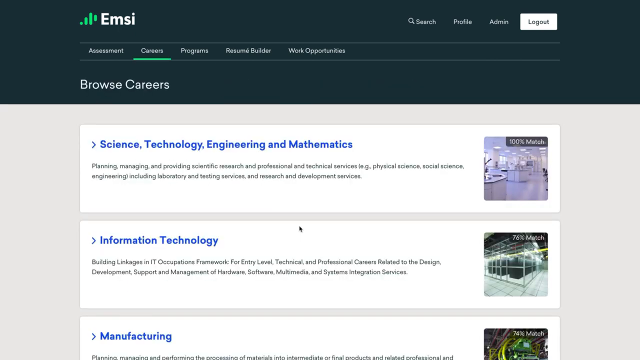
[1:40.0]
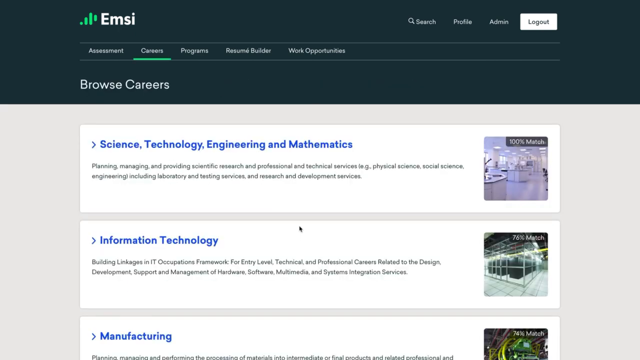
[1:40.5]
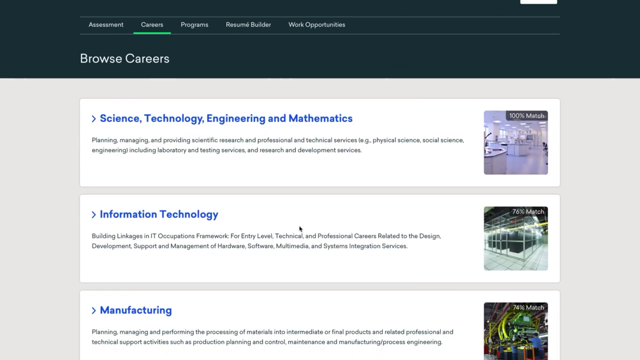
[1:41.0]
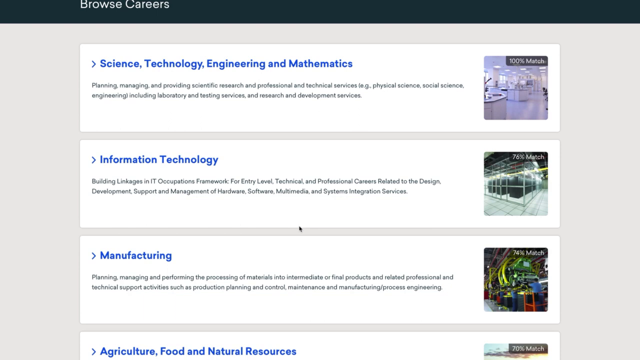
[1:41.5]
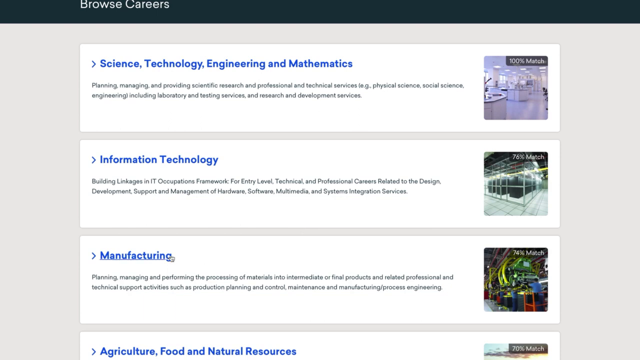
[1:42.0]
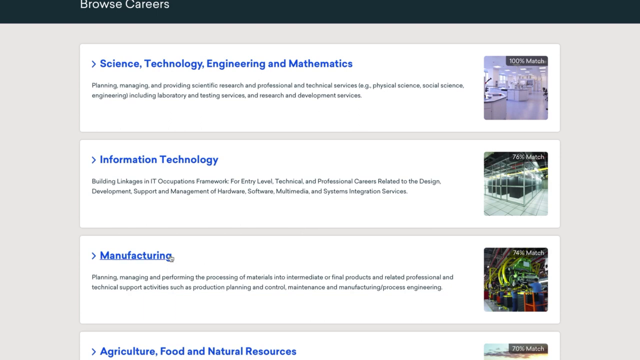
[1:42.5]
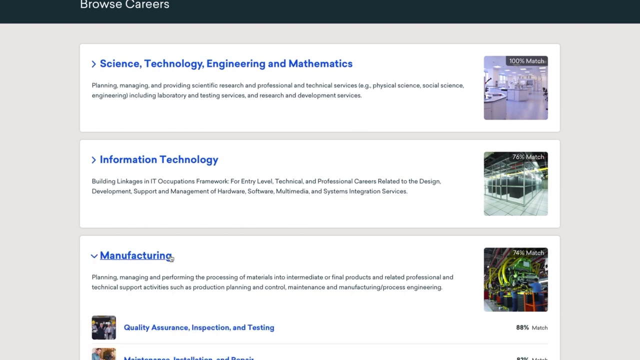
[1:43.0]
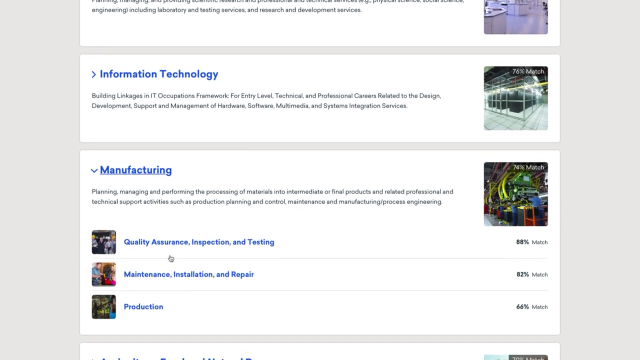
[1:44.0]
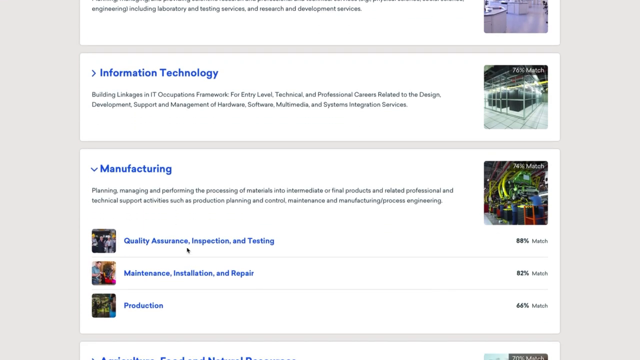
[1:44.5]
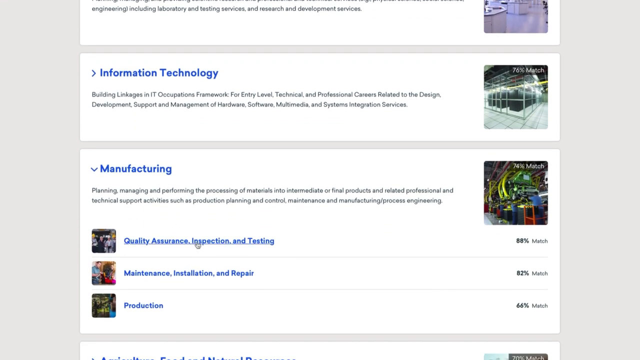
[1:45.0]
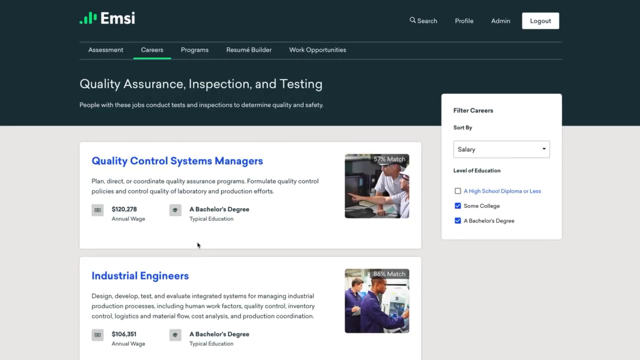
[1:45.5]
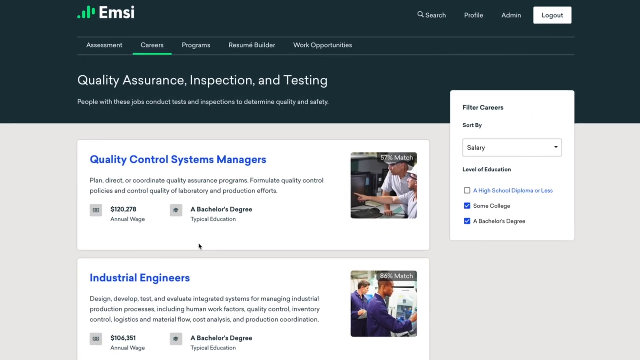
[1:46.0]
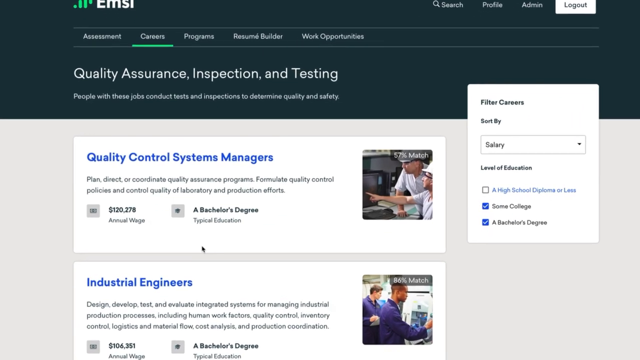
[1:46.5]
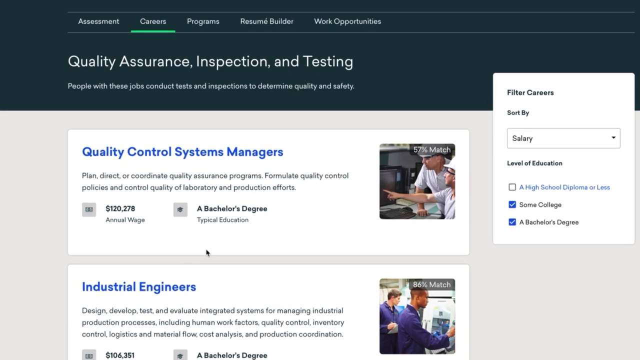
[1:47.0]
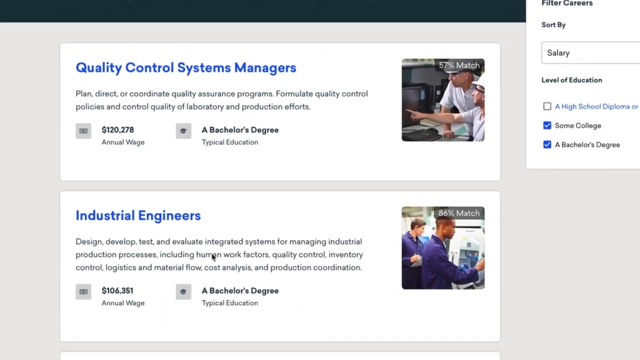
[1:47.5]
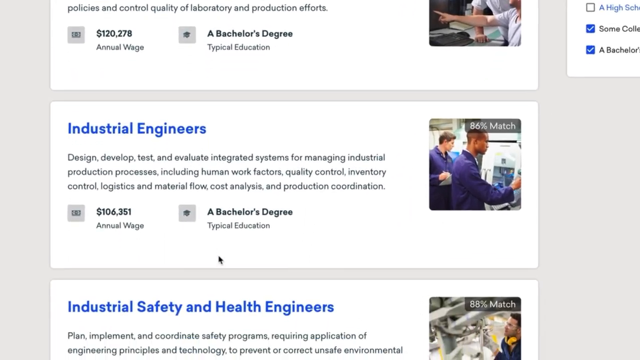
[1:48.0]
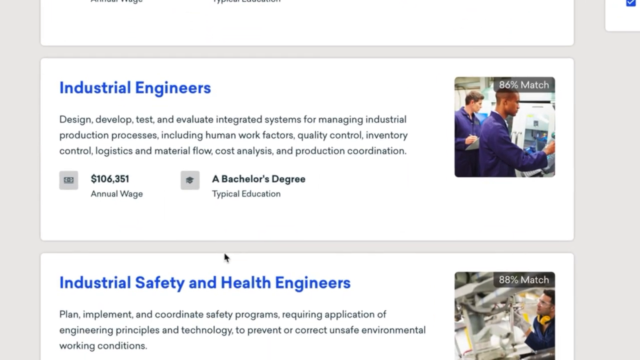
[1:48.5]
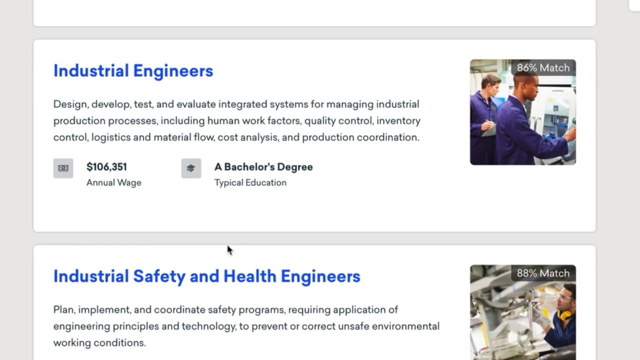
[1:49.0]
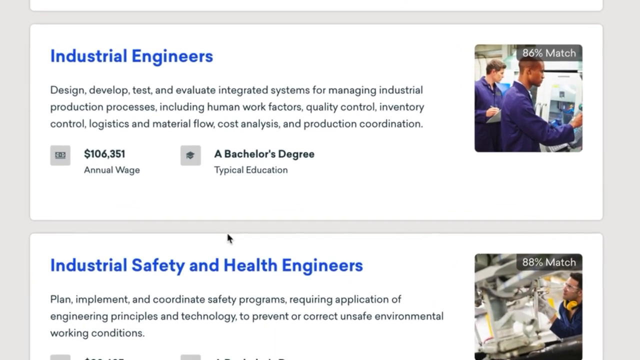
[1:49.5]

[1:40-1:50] On the MC Job Postings website, the user is on a page titled "Browse Careers," with the sections Science, Technology, Engineering, and Mathematics; Information Technology; and Manufacturing. The user clicks Manufacturing, which opens a sub-menu with options such as Quality Assurance, Inspection, and Testing; Maintenance, Installation, and Repair; and Production. The user clicks Quality Assurance, Inspection, and Testing, which leads to the Quality Assurance, Inspecting, and Testing page. Two options are on screen, Quality Control Systems Managers and Industrial Engineers. The user scrolls down to a third option, Industrial Safety and Health Engineers.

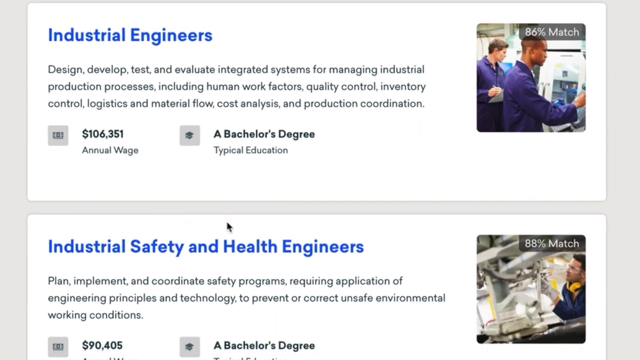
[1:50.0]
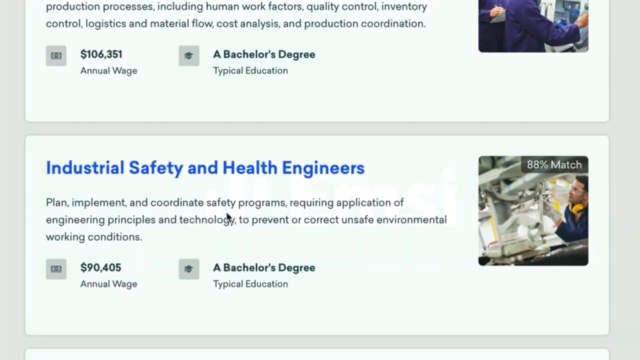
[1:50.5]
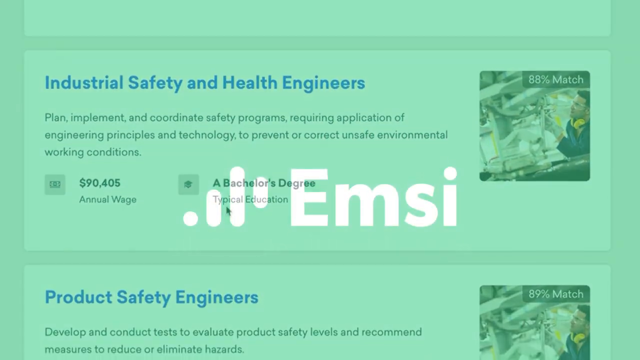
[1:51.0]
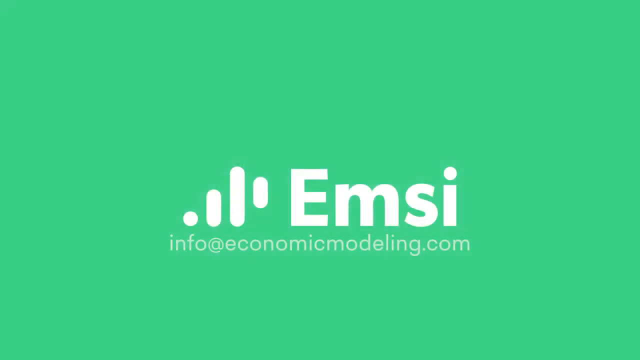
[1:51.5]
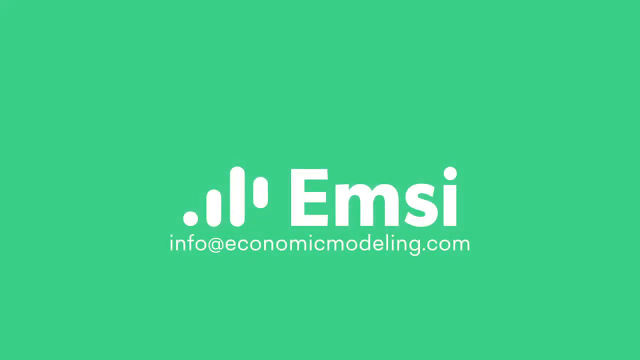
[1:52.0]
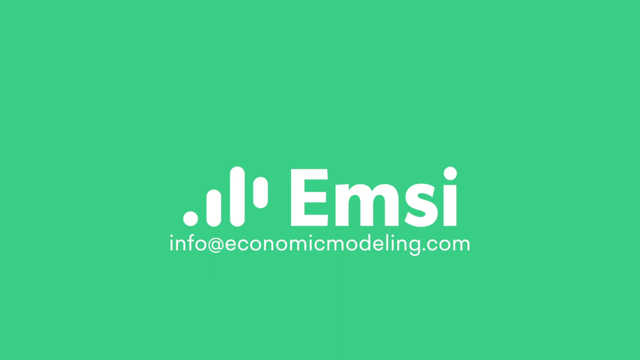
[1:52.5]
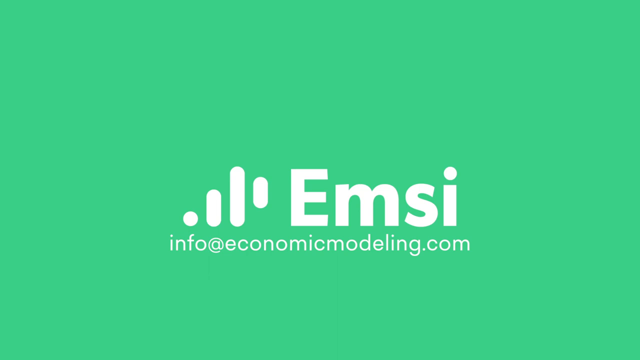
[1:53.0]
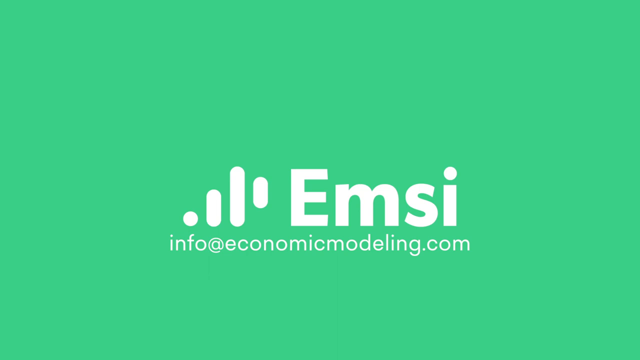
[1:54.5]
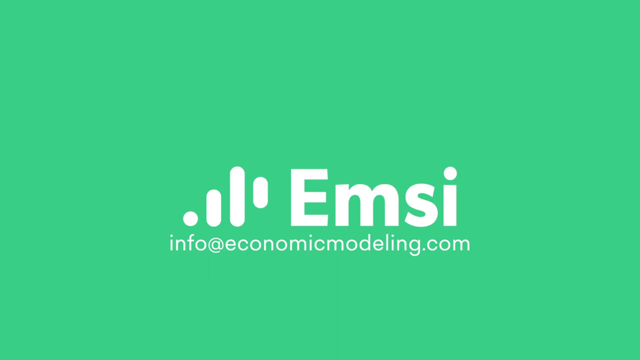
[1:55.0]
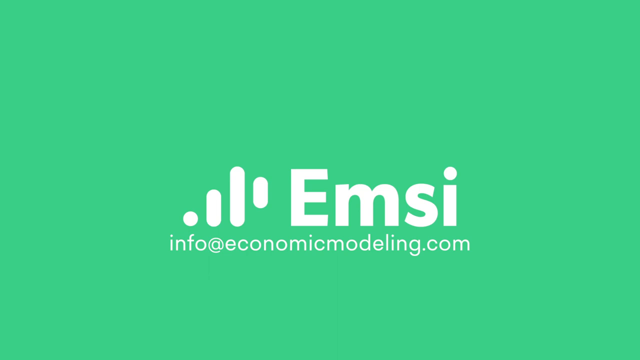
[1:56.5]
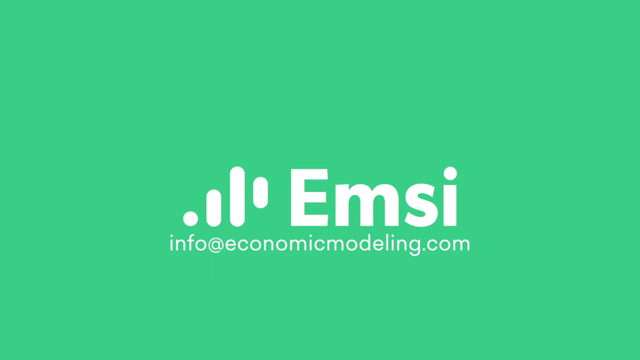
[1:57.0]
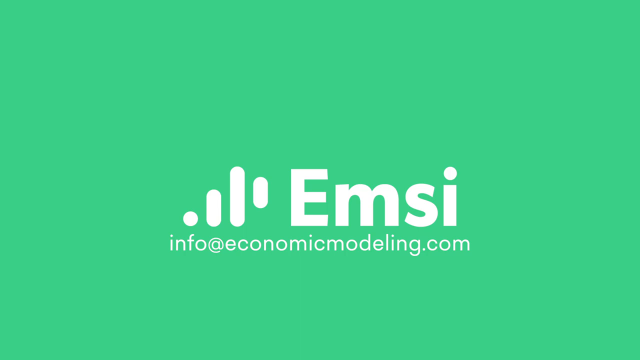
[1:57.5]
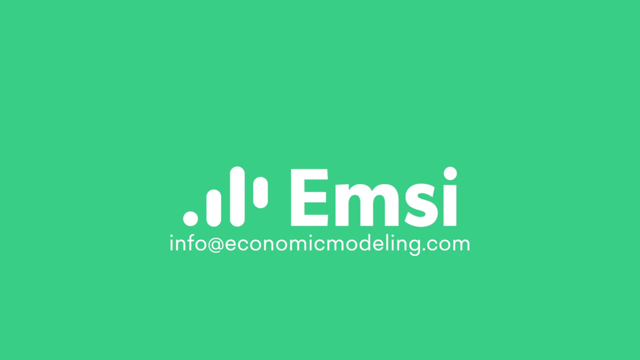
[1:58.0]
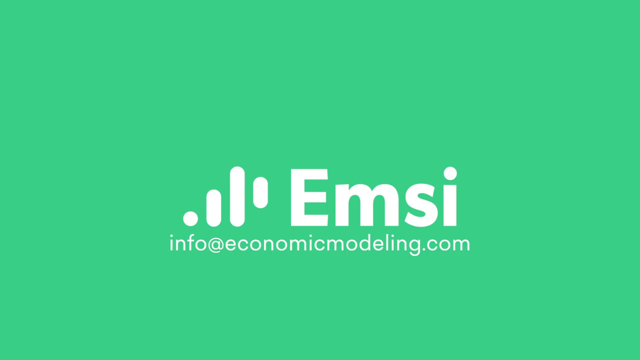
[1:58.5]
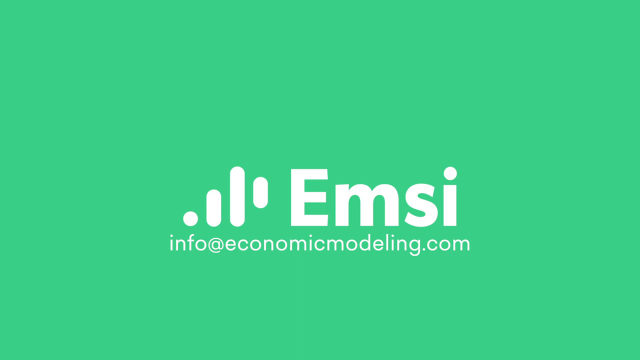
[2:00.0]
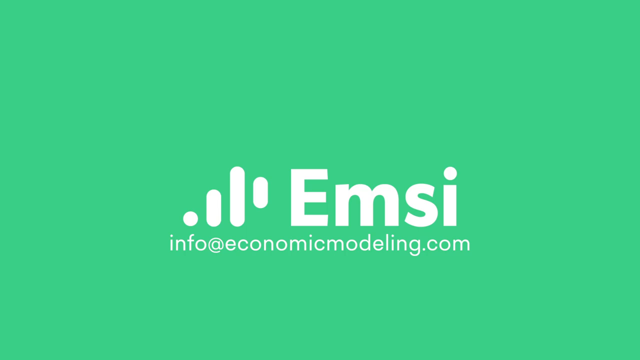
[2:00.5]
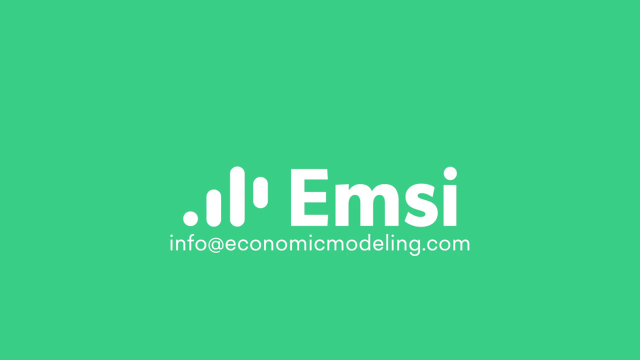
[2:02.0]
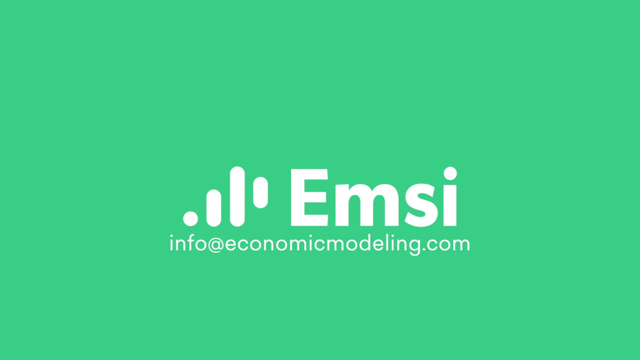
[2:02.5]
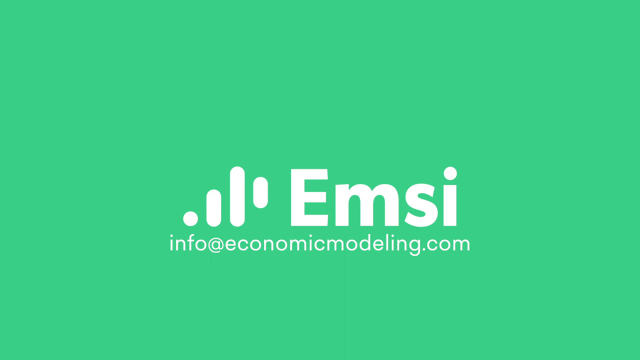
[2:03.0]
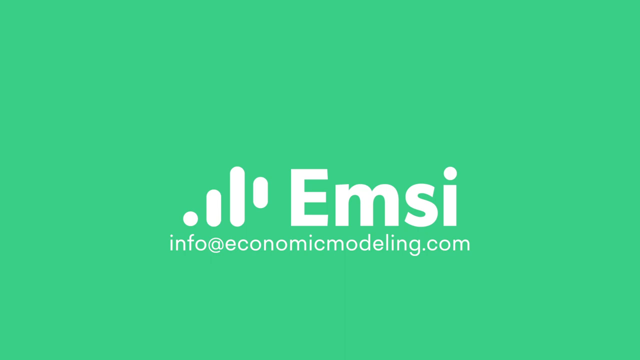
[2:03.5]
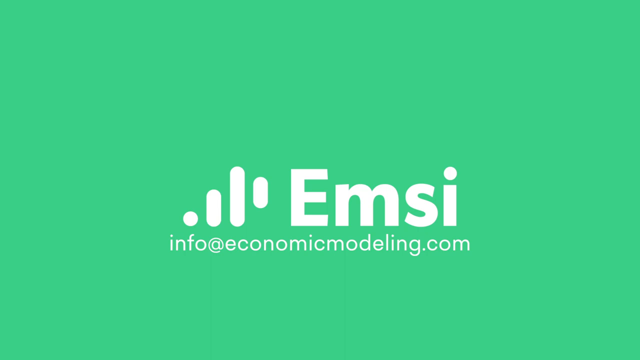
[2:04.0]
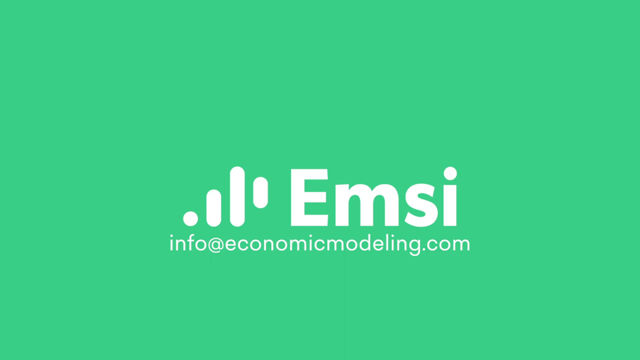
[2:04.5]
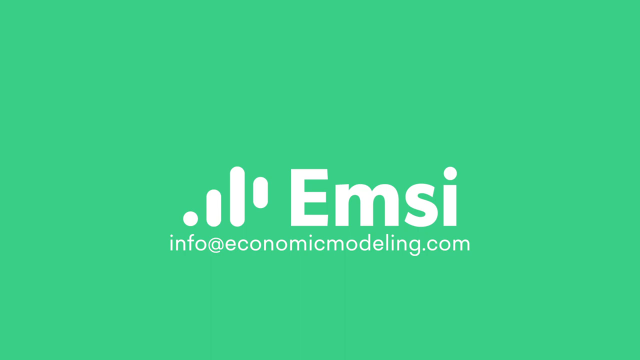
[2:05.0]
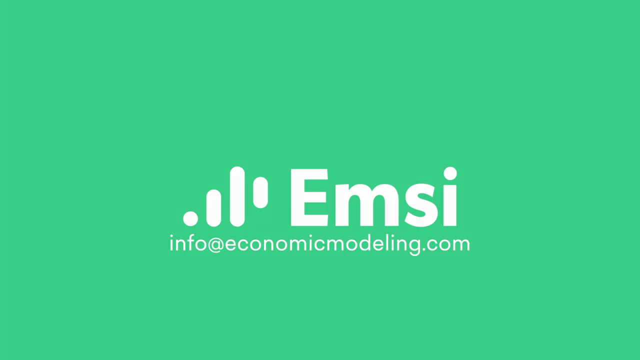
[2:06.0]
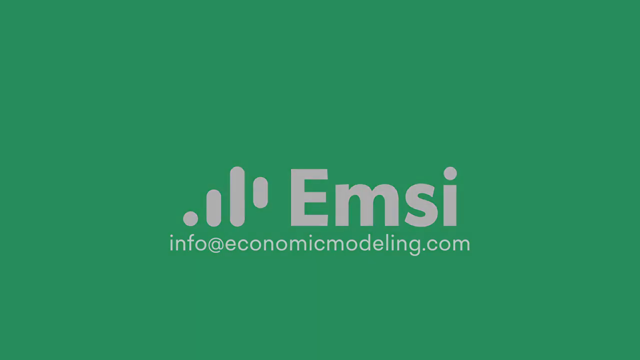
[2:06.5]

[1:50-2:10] Two job postings are on screen on the website. The first says "industrial engineers" and shows an image of two men in blue suits working with machines. Its description reads: "design, develop, test, and evaluate integrated systems for managing industrial production processes, including human work factors, quality control, inventory control, logistics and material flow, cost analysis, and production coordination." The annual wage is $106,351 and a bachelor's degree is typically required. The second is labeled "industrial safety and health engineers" and shows a man working with a large machine; its description reads: "plan, implement, and coordinate safety programs requiring application of engineering principles and technology to prevent or correct unsafe environmental working conditions." The annual wage is $90,405 and a bachelor's degree is typically required. The website fades out to a green screen with a white logo for Emsi and the e-mail address info@economicmodeling.com. The logo and e-mail address remain on screen for a moment before the screen fades to black.